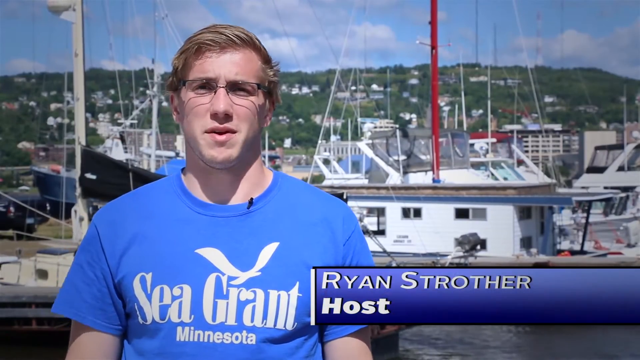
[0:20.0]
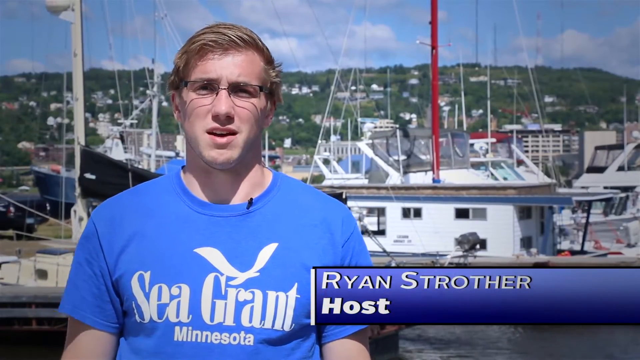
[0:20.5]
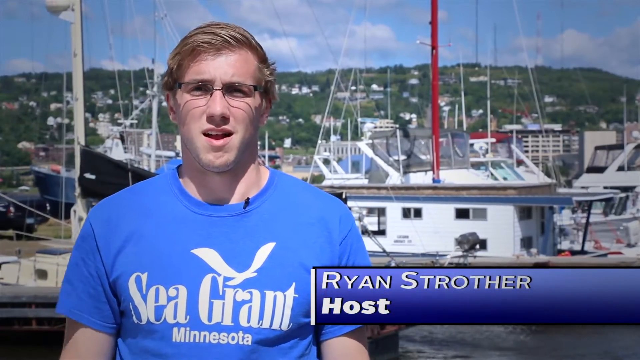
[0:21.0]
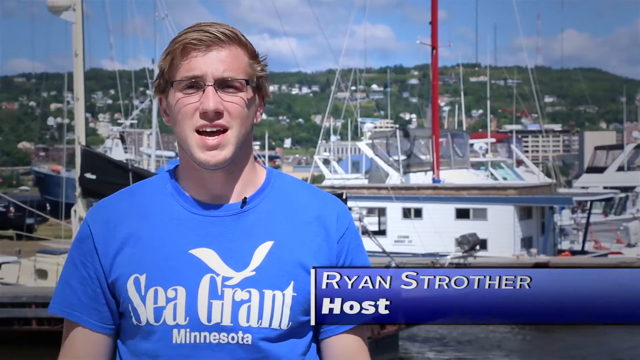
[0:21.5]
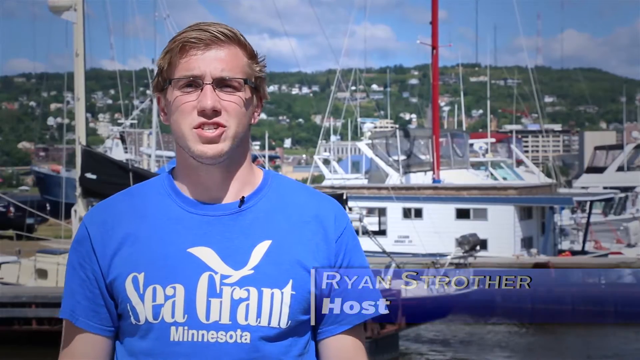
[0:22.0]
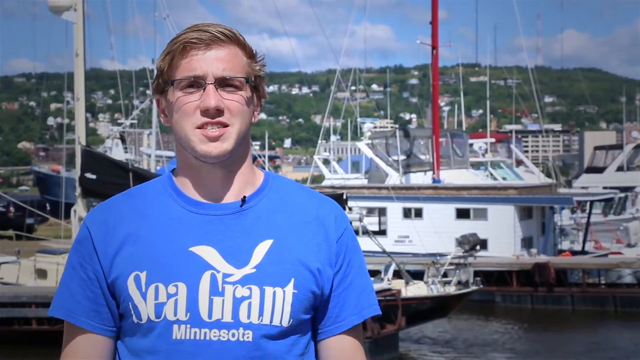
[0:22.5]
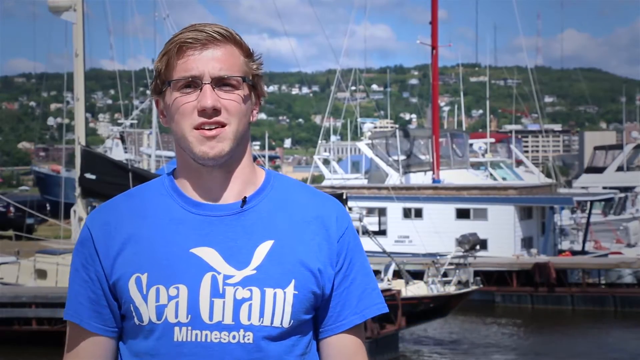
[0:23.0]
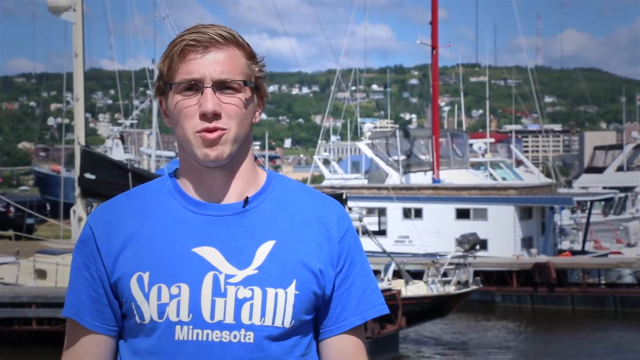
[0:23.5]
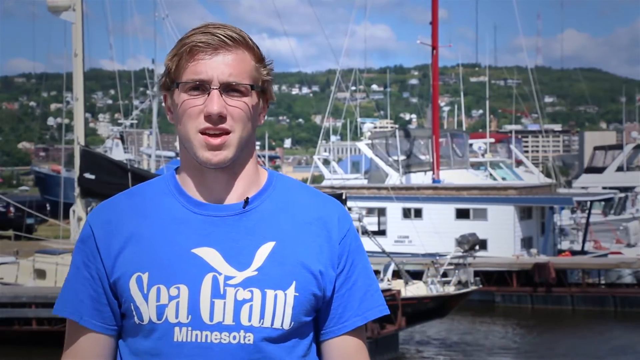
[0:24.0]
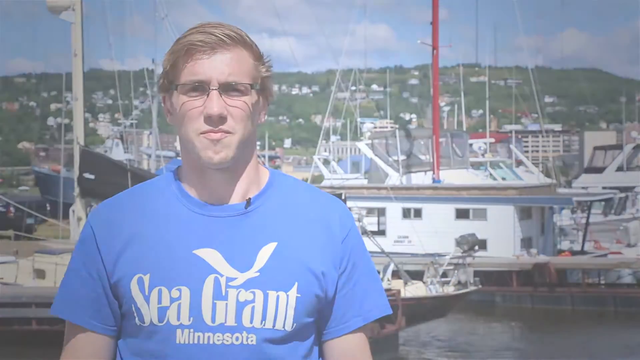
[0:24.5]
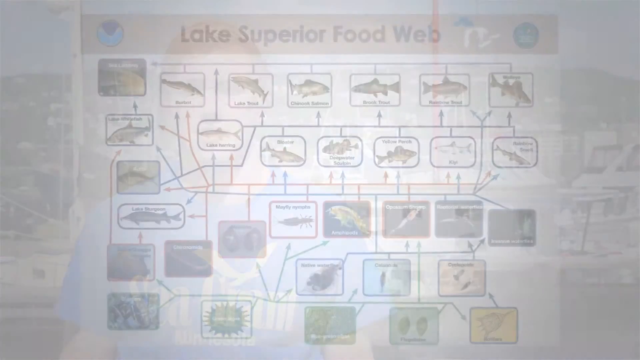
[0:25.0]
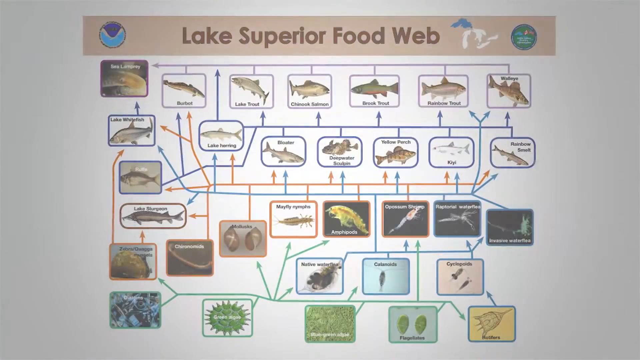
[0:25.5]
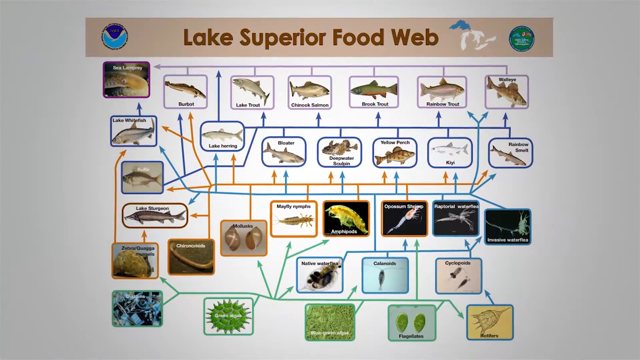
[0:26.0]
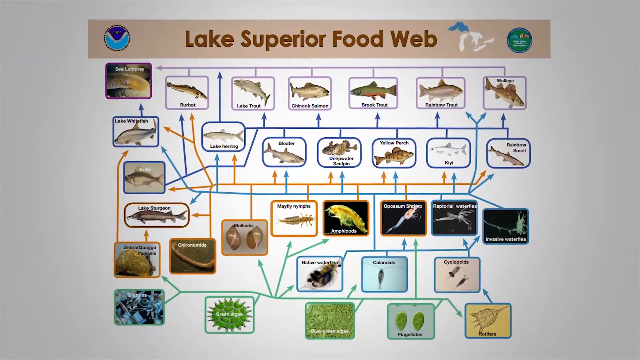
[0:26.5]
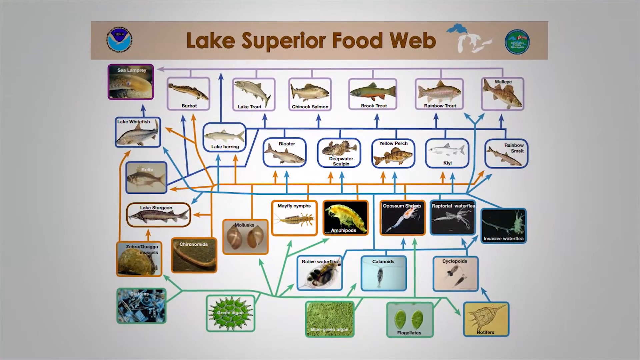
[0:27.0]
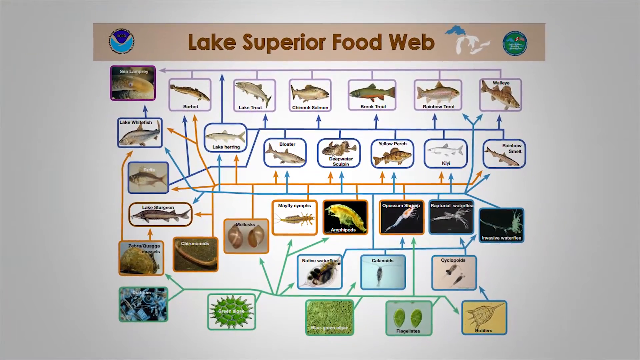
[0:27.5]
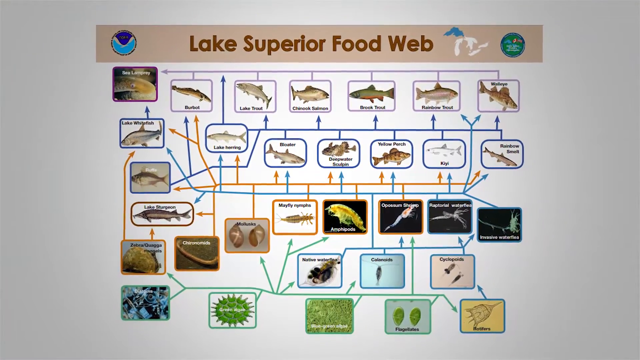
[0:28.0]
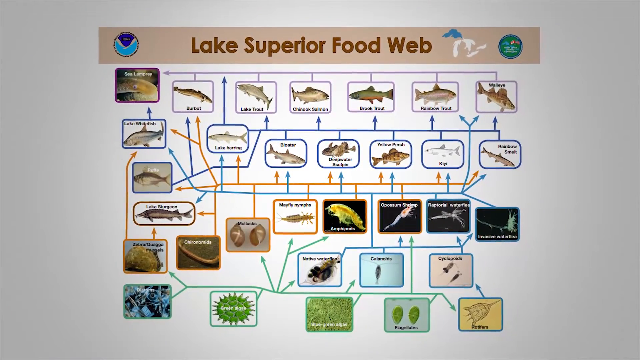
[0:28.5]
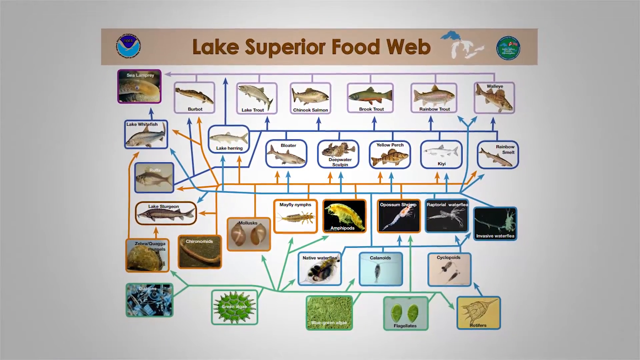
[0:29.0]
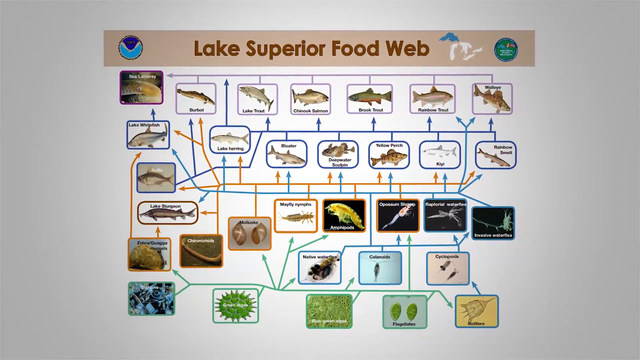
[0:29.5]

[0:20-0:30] A man with blonde hair and glasses, wearing a blue shirt that says "Sea Grant, Minnesota," stands in front of a bay area with boats. Text at the bottom of the screen gives his name as Ryan Strother and identifies him as a host. The video then shows a chart of the Lake Superior food web with a whole bunch of different fish, bacteria and animals on it. It runs from the largest fish at the top of the food web all the way down to the bacteria living in the water. Different types of fish are visible, with a yellow fish and some trout at the top.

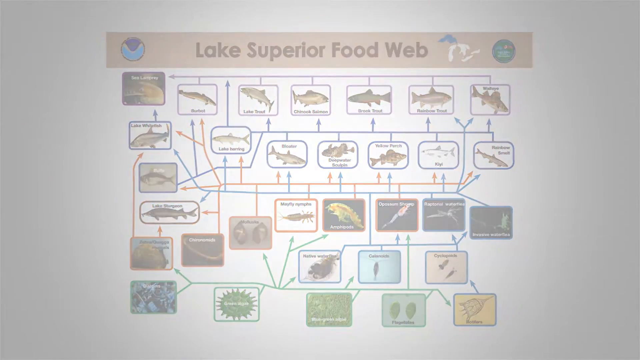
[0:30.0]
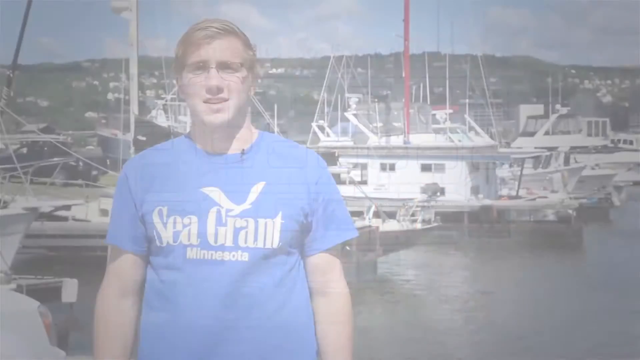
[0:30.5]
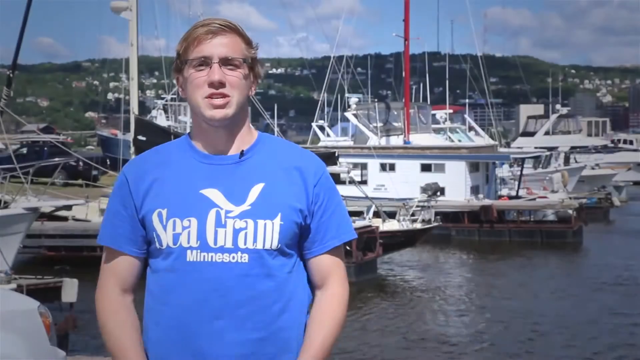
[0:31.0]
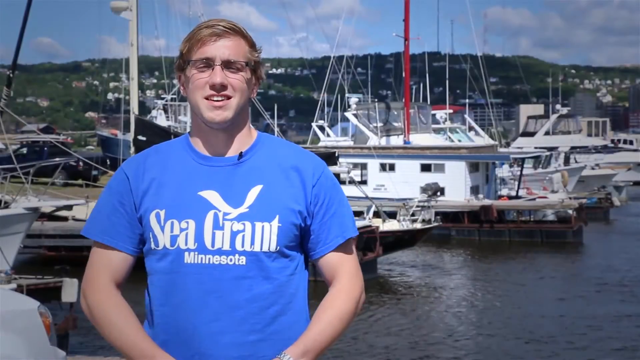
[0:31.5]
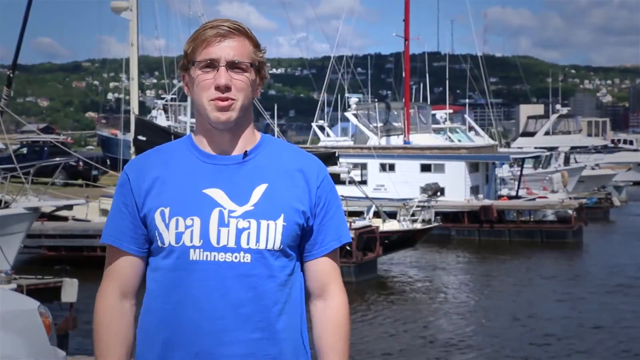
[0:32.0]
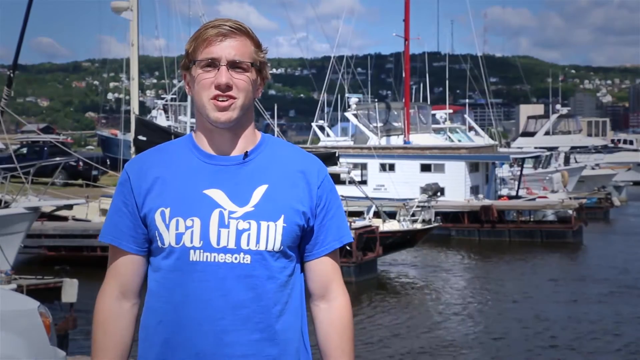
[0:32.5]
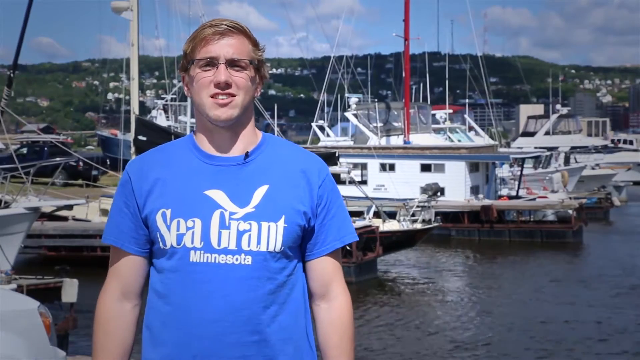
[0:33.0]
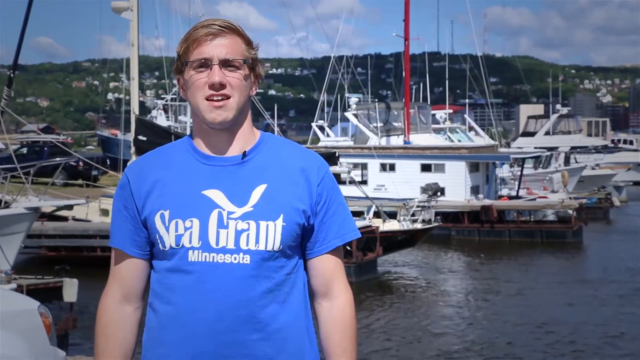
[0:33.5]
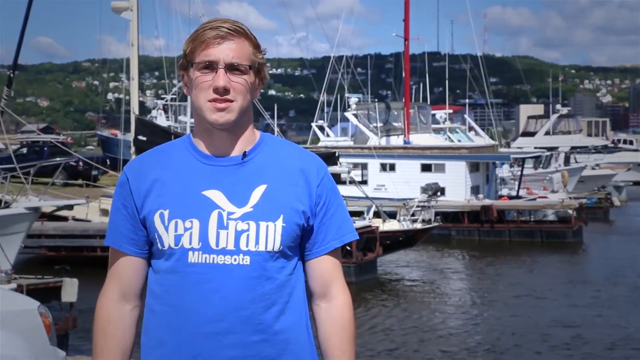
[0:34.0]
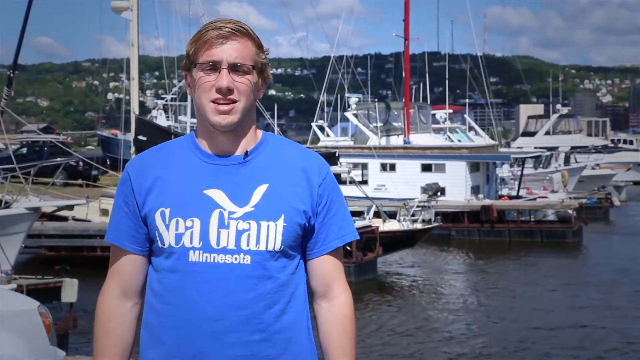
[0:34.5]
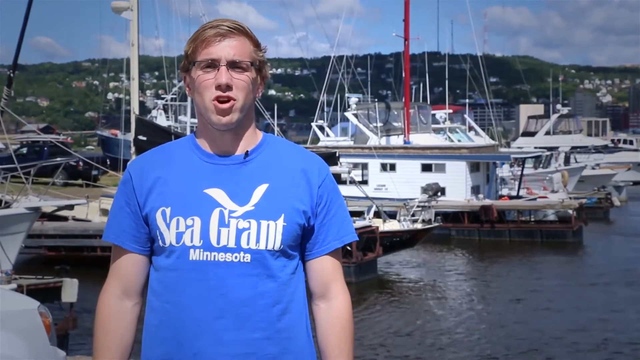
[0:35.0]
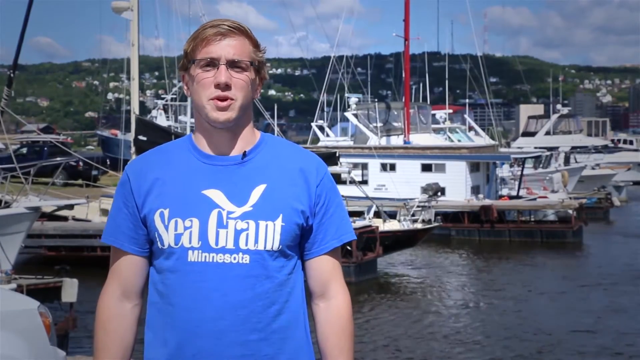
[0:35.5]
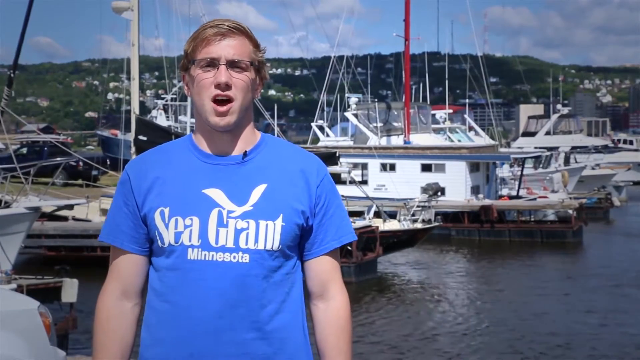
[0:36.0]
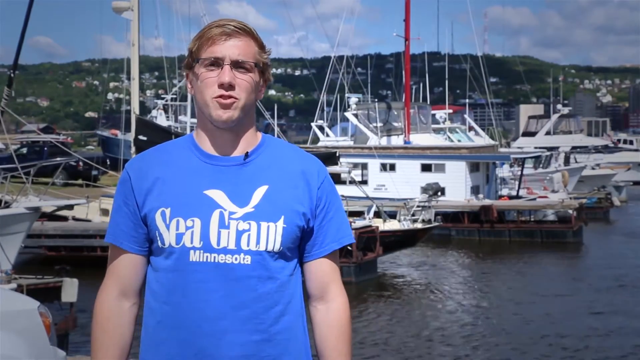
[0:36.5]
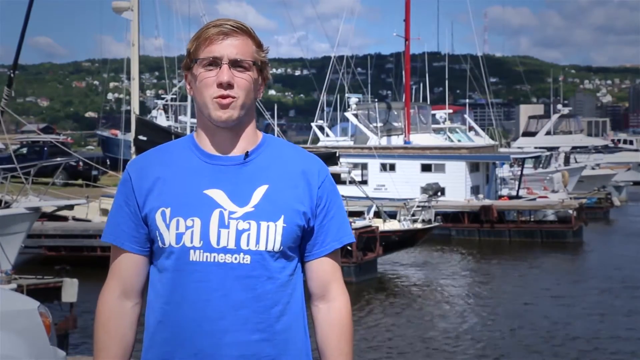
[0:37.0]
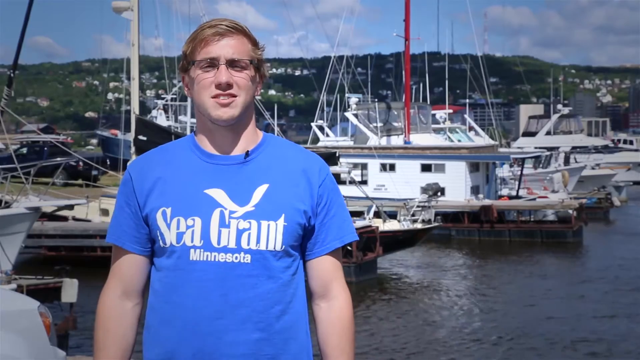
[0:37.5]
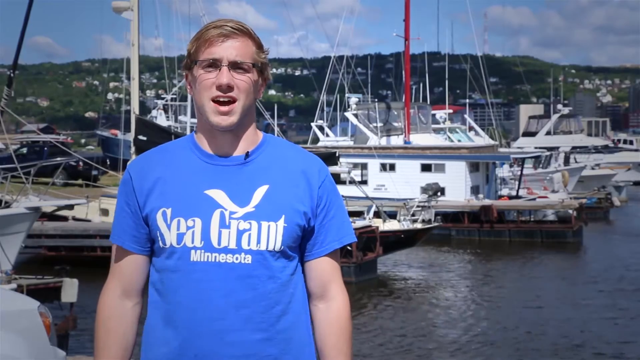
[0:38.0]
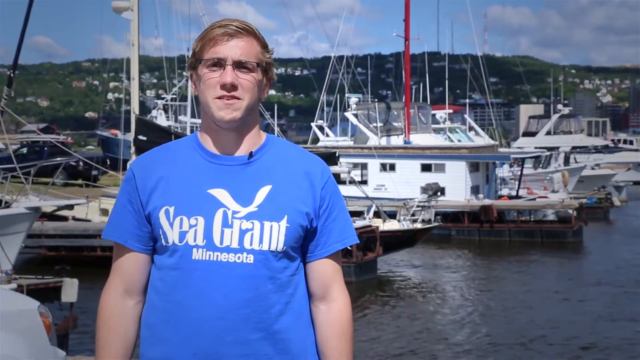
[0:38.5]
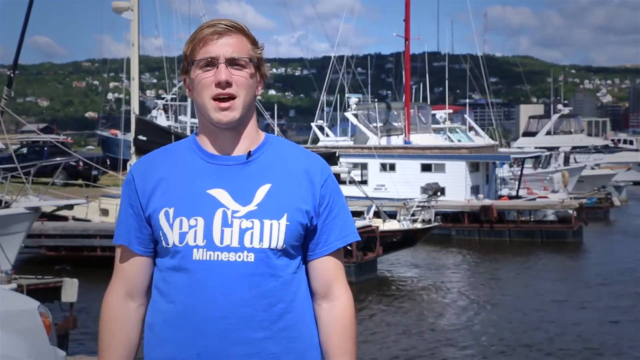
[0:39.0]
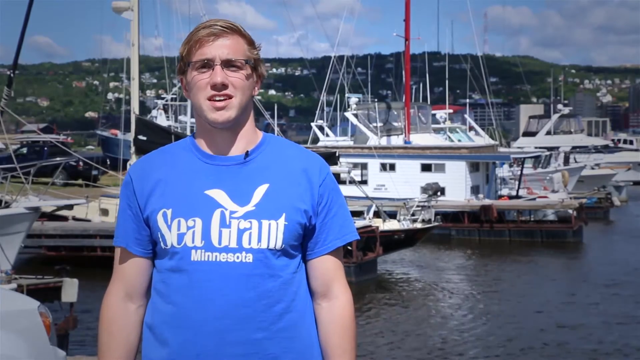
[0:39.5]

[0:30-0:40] A man with glasses and blonde hair, wearing a blue shirt that says "Sea Grant, Minnesota," stands in front of a bay area with boats. It is a sunny and cloudy day, and he is talking while the wind blows his shirt around. The video then shows the Lake Superior food web, with the larger fish at the top, microorganisms at the bottom, and different fish and smaller organisms that live in the water in the middle.